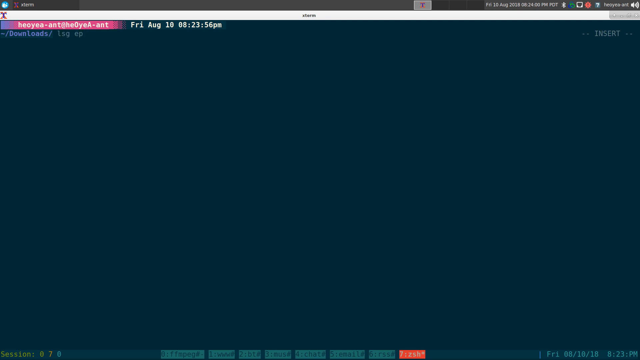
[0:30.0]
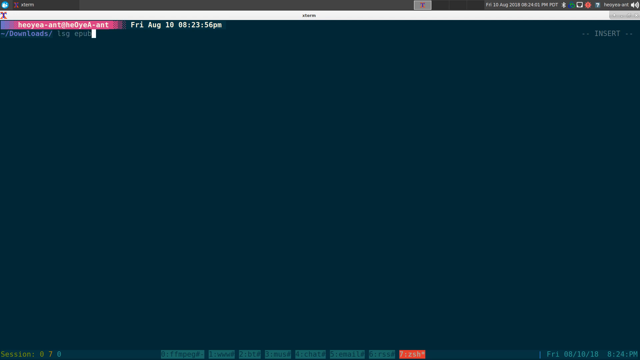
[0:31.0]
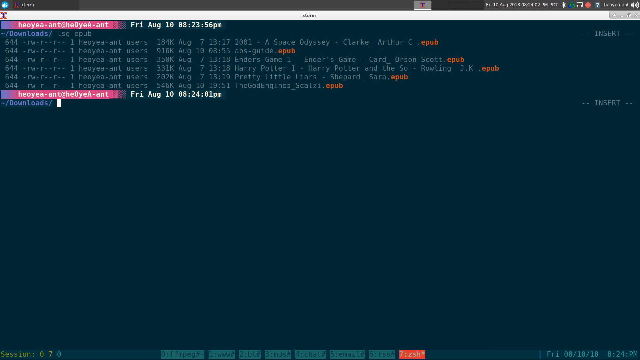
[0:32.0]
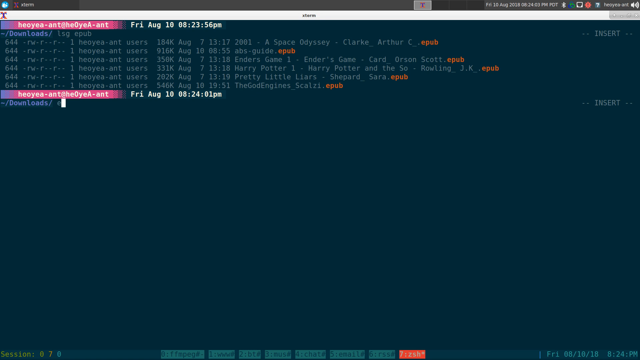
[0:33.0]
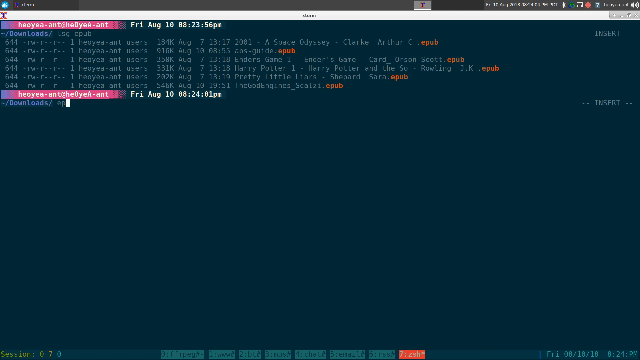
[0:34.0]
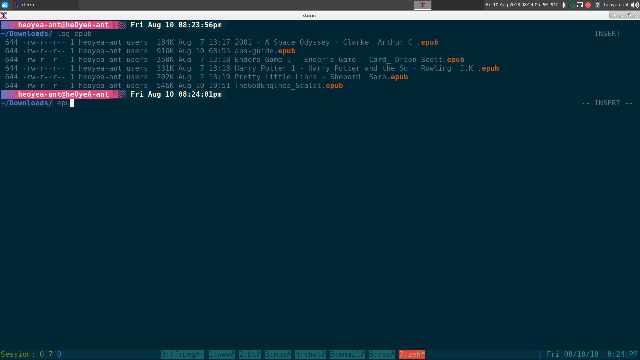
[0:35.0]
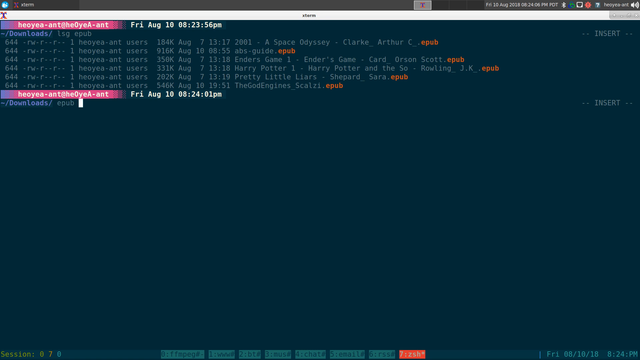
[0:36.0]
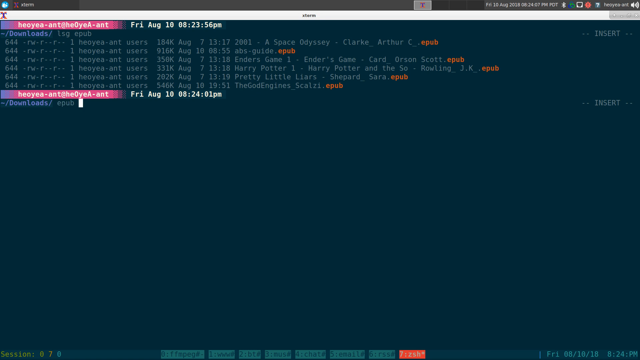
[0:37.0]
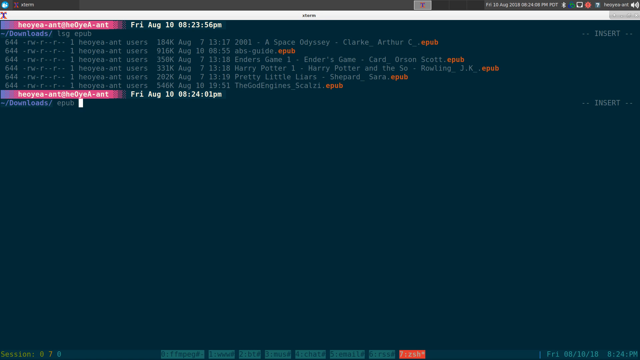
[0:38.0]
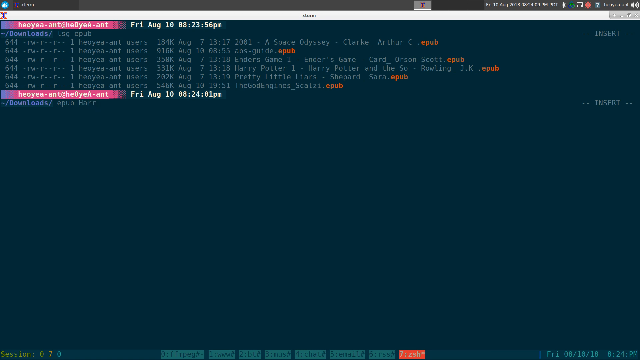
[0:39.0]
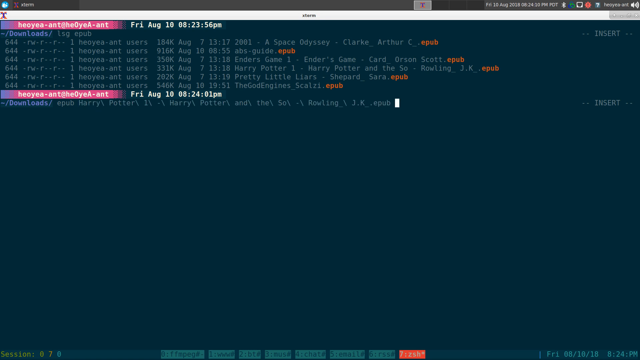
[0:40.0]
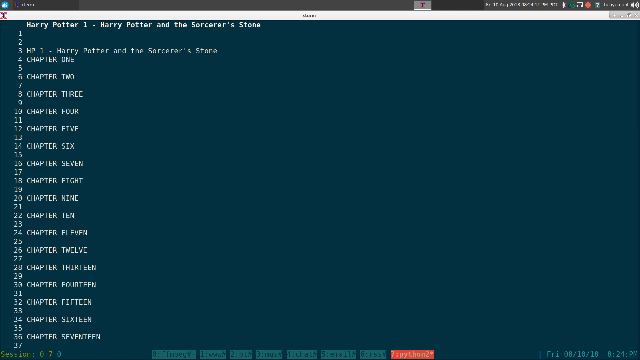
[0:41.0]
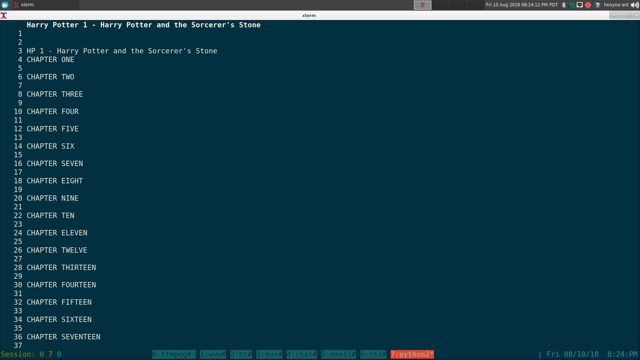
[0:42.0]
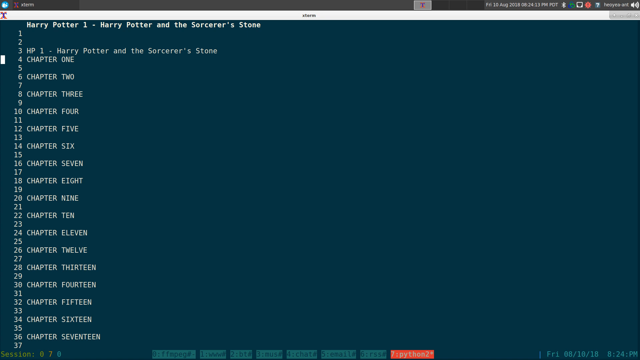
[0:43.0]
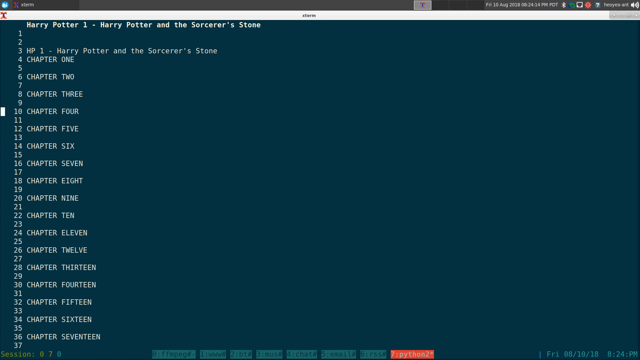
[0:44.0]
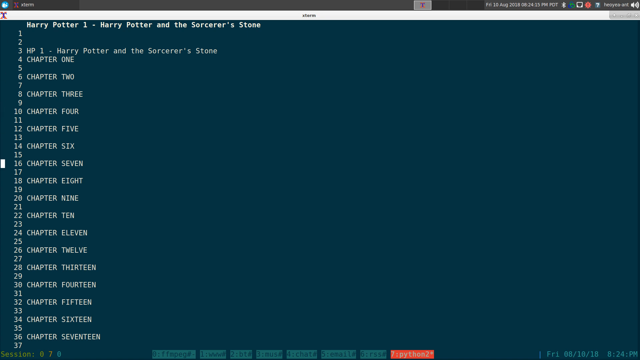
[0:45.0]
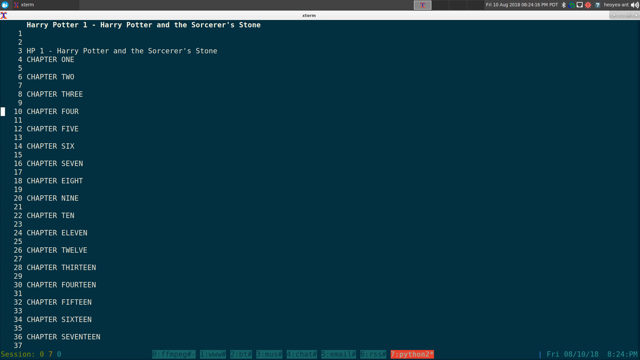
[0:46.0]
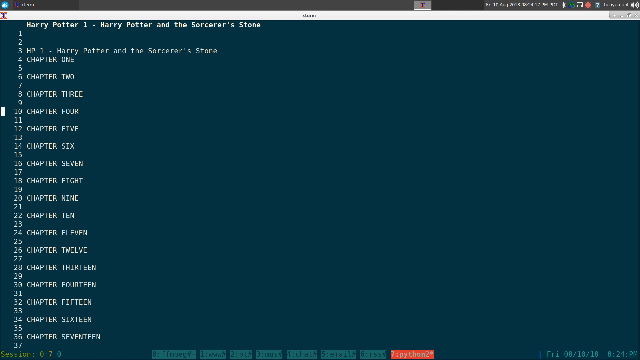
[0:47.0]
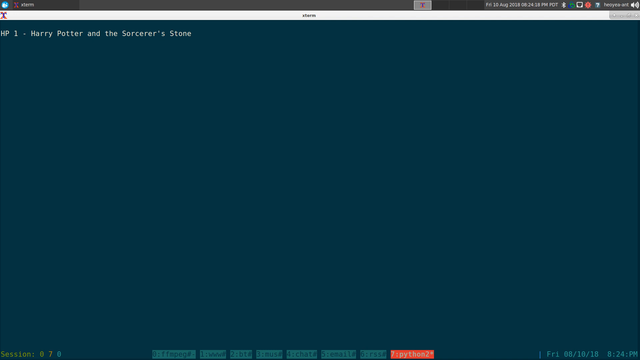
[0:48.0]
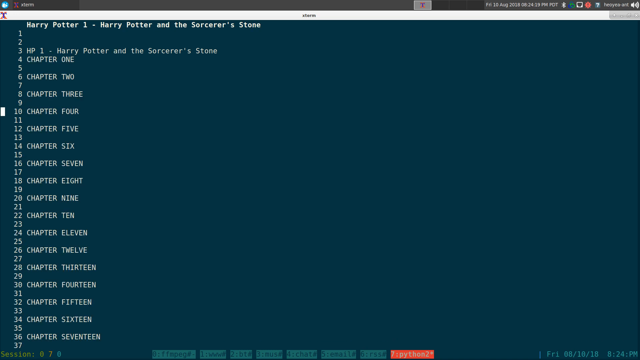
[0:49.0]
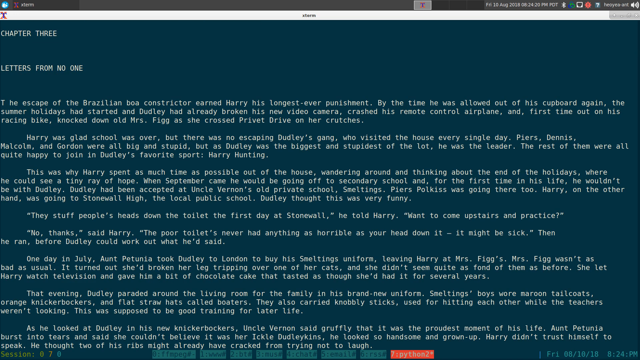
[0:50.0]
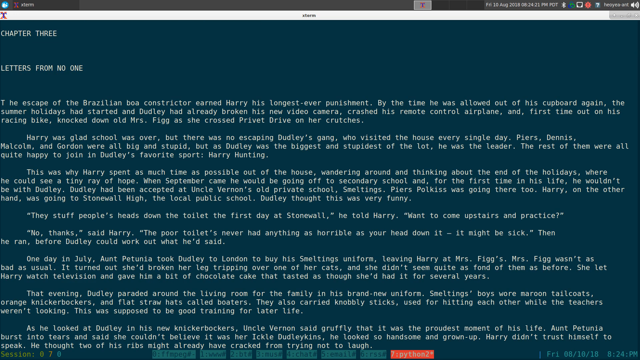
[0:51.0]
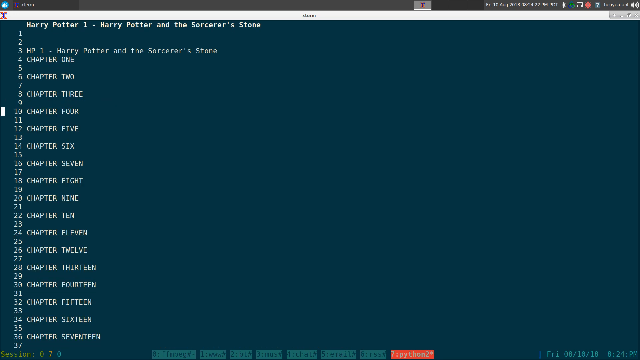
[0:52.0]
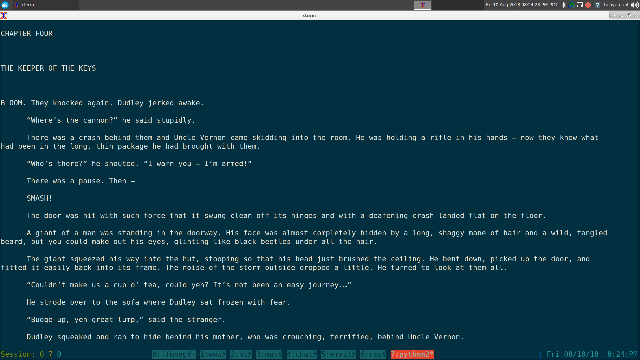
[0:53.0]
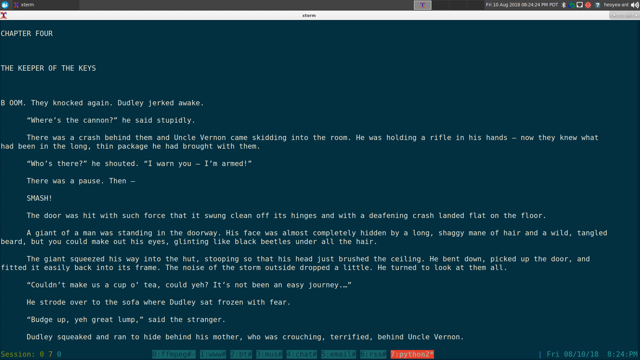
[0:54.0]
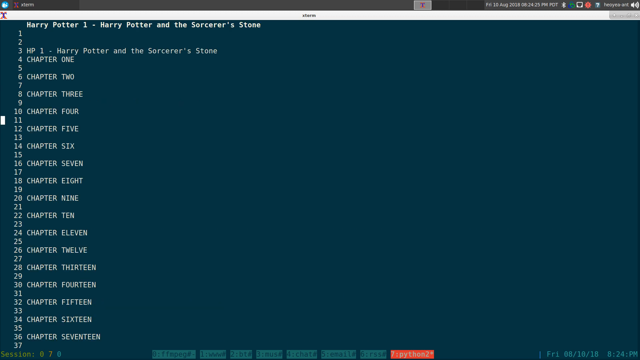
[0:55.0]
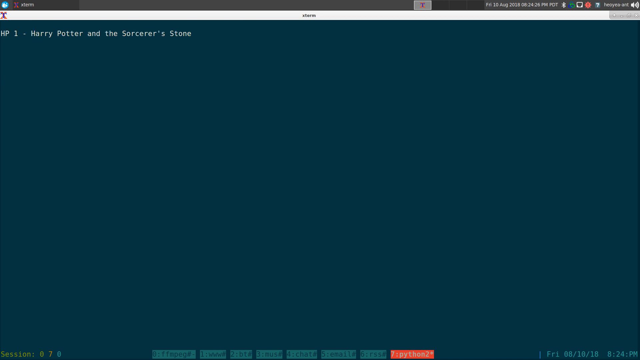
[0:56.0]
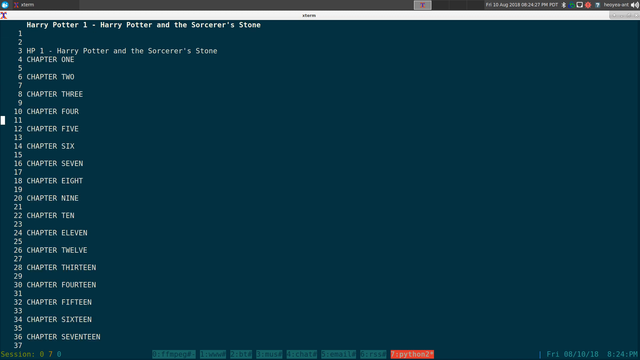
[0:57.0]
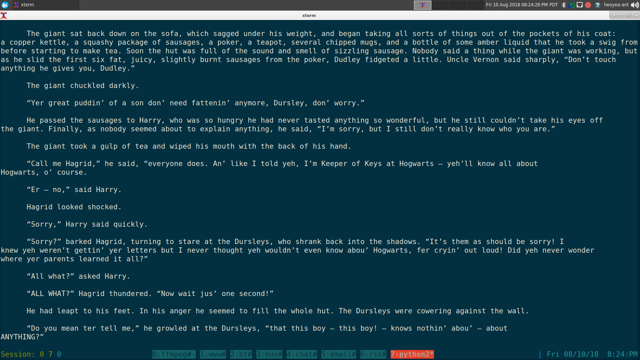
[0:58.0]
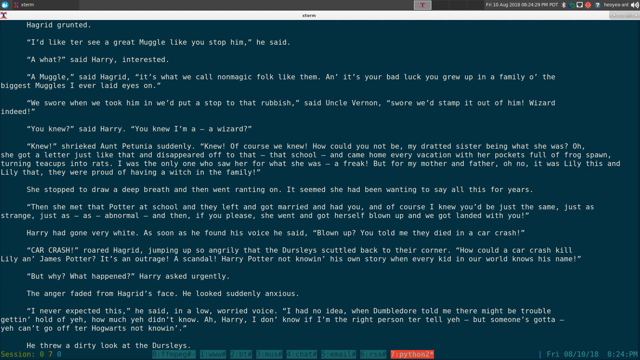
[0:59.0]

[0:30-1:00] The user types "lsg epub", and below appears a list of files ending in the .epub extension. Each file has details such as the available operations, like read and write, an associated date, its name, and how much space it takes up. The user then types "epub HarryPotter1-HarryPotterAndTheSo-RowlingJ.K.epub", with all the words after epub suffixed with a backslash. After pressing enter, several numbered lines appear, the first being lines 1 through 37. This seems to print out the contents of Harry Potter and the Sorcerer's Stone, as some lines indicate chapters. The user scrolls down with the cursor, then back up again, and enters chapters. Chapter 4 opens with "Harry Potter1-HarryPotterAndTheSorcerer'sStone", and chapter 3 says "letters from no one". Clicking on a chapter line itself does not open the contents; the user has to click the line right after the chapter to open the text of the book. They then scroll through one of the chapters.